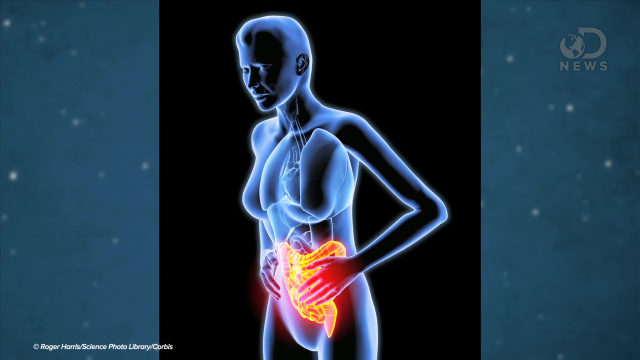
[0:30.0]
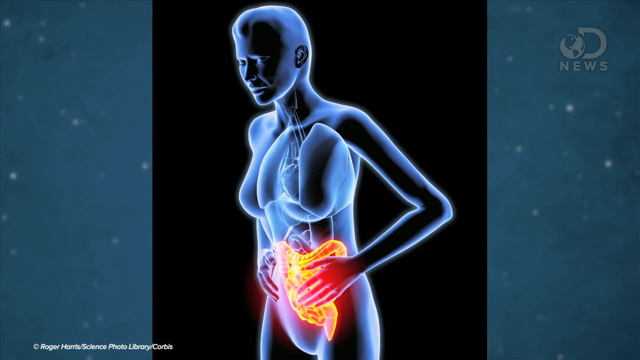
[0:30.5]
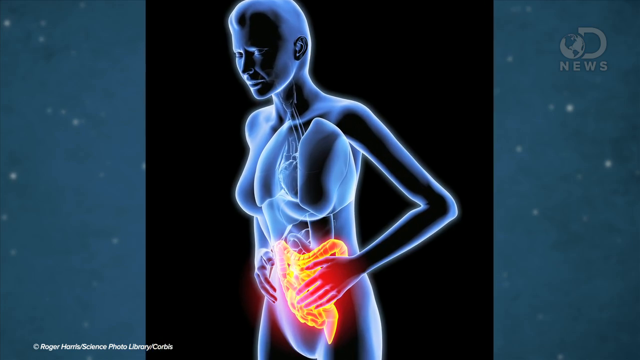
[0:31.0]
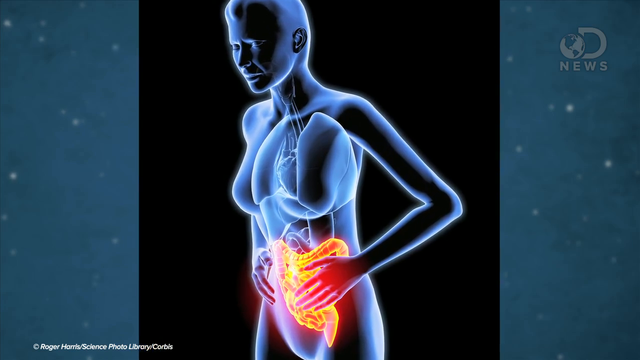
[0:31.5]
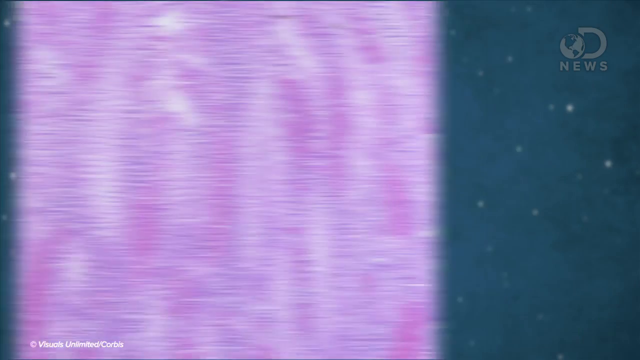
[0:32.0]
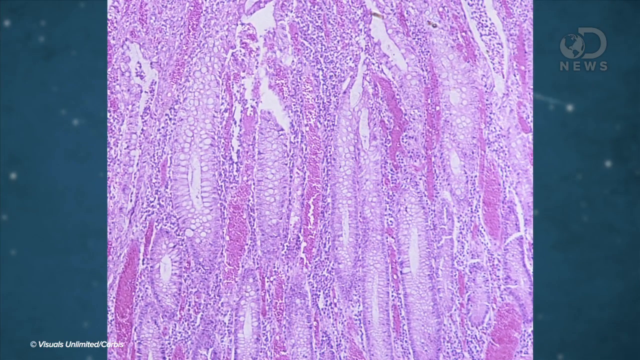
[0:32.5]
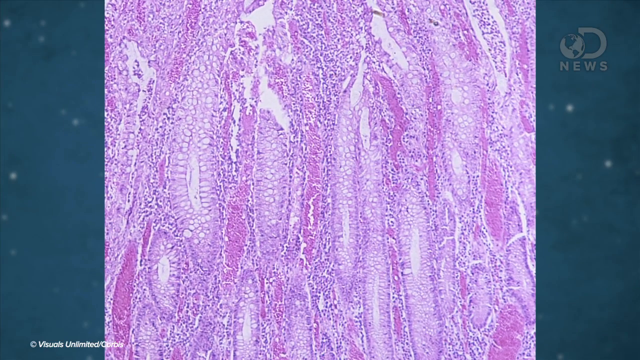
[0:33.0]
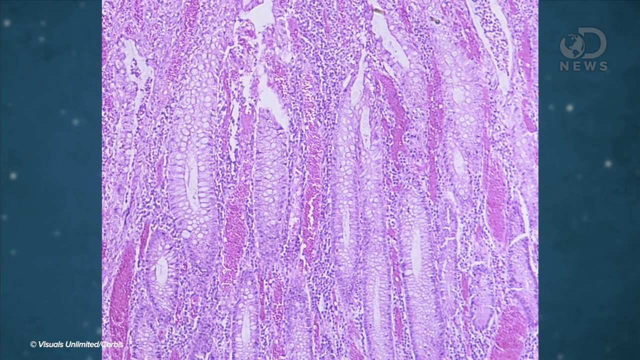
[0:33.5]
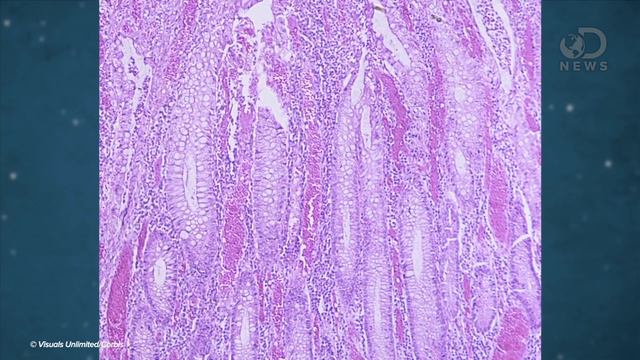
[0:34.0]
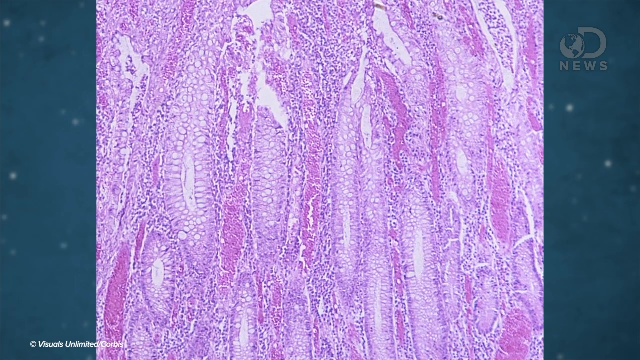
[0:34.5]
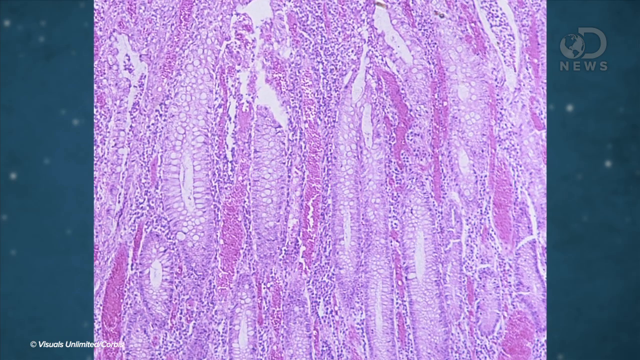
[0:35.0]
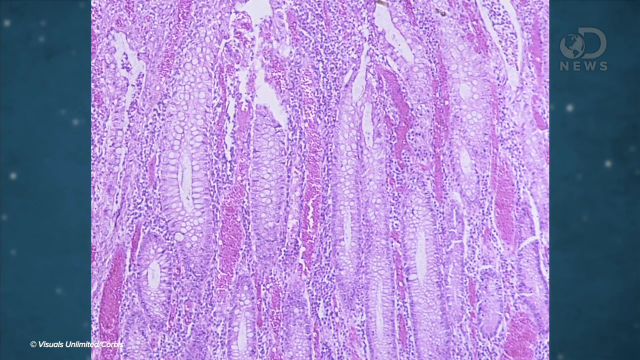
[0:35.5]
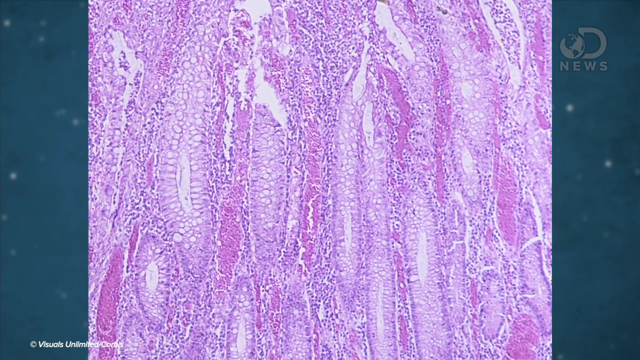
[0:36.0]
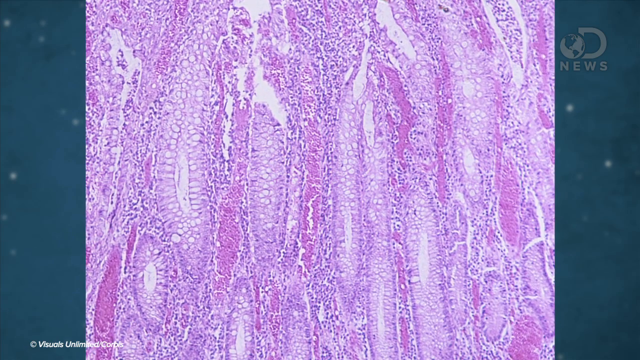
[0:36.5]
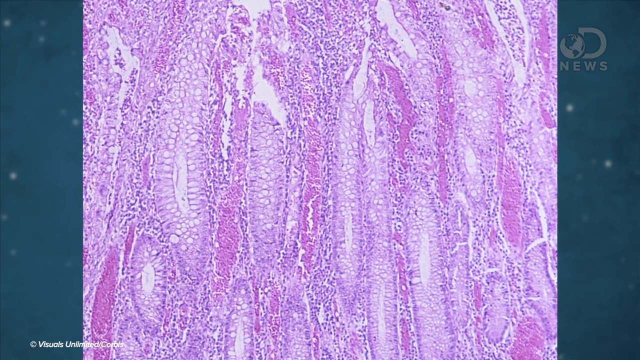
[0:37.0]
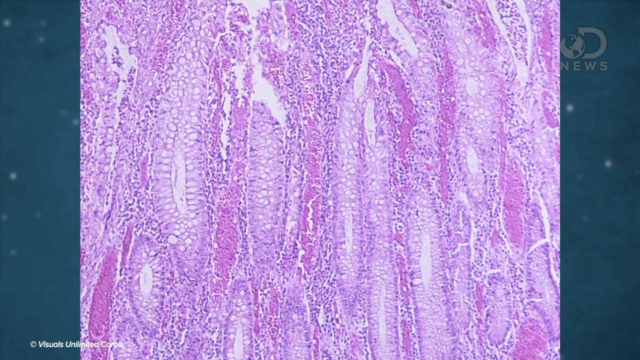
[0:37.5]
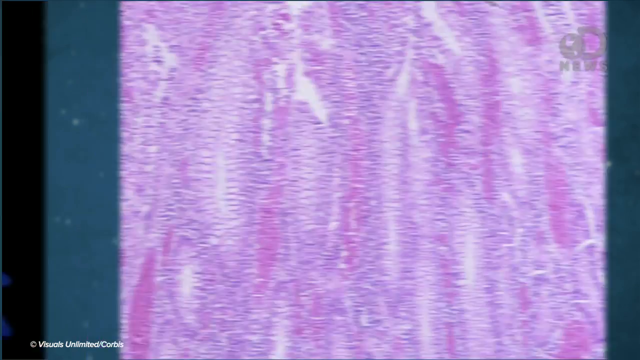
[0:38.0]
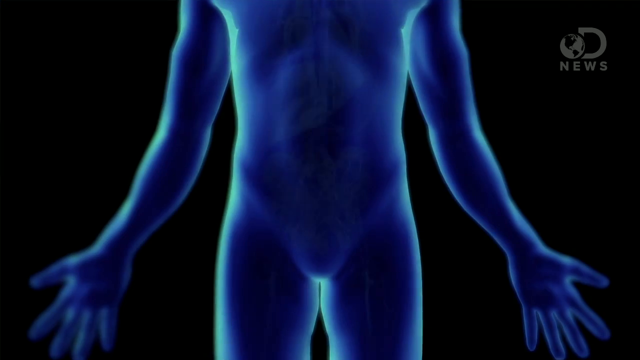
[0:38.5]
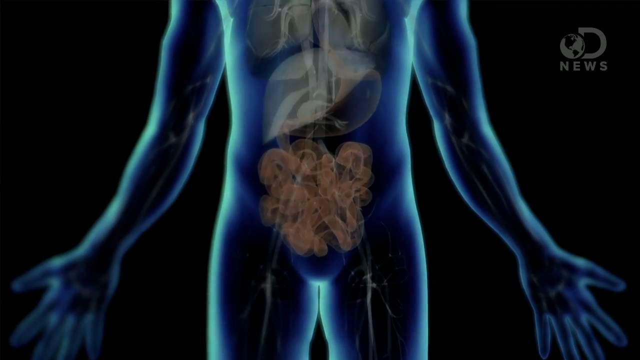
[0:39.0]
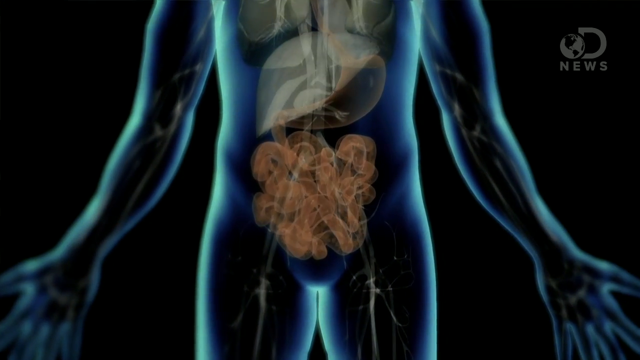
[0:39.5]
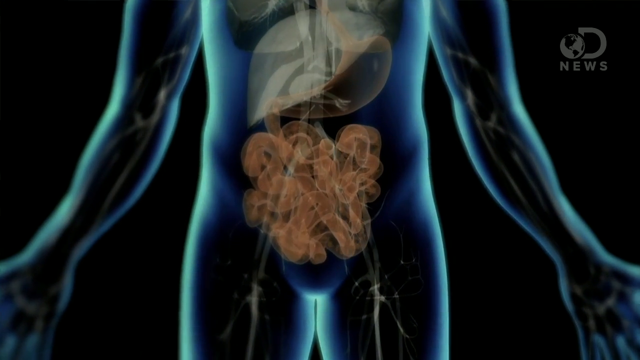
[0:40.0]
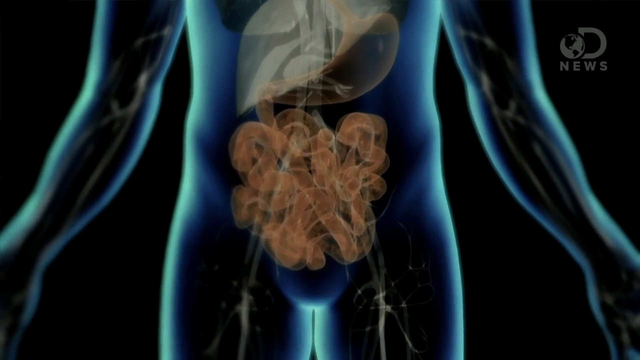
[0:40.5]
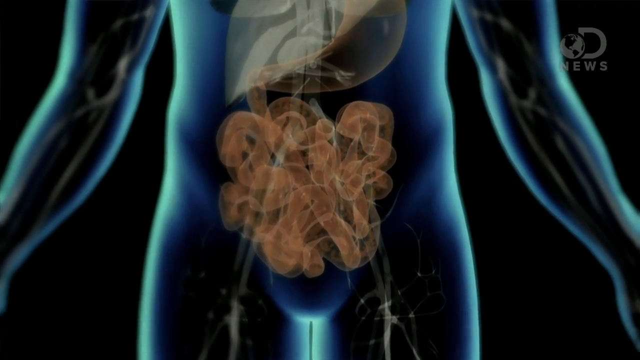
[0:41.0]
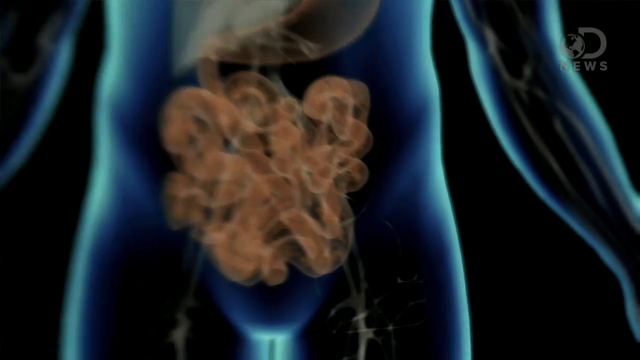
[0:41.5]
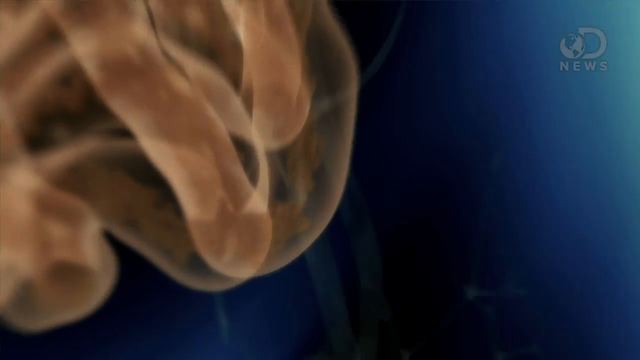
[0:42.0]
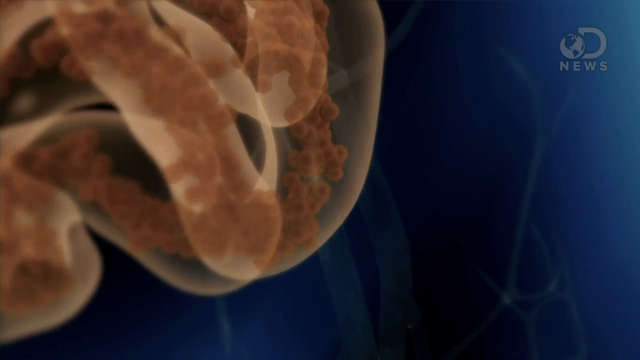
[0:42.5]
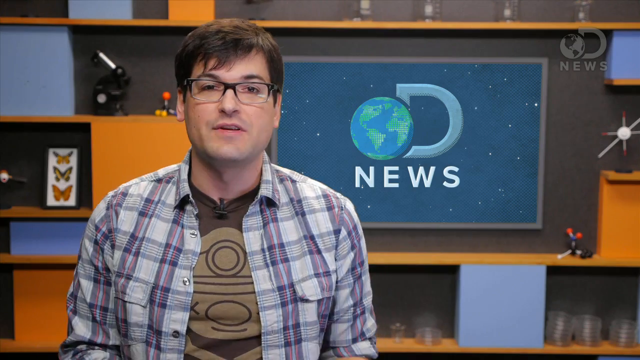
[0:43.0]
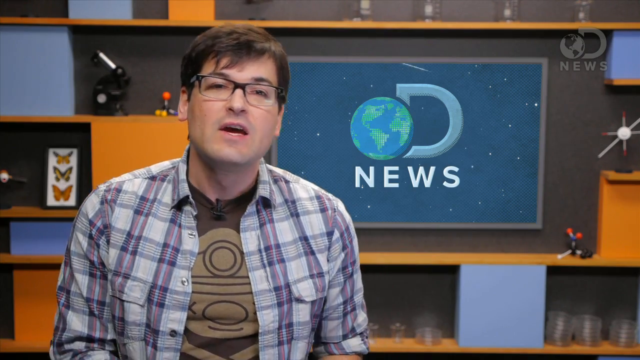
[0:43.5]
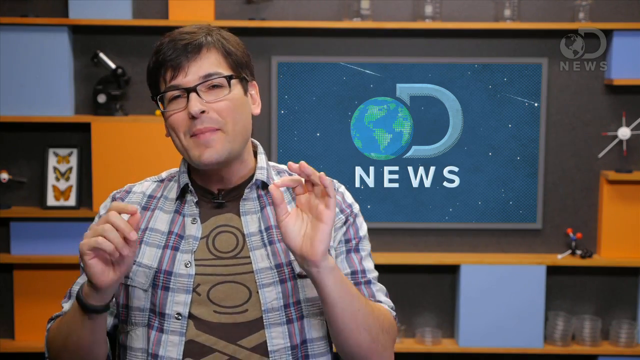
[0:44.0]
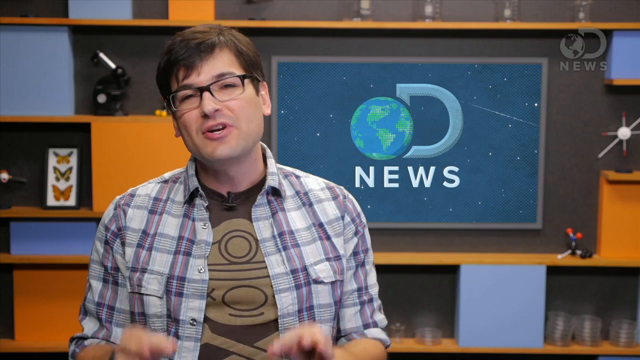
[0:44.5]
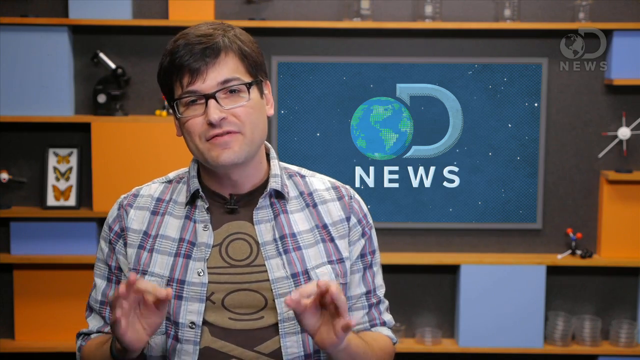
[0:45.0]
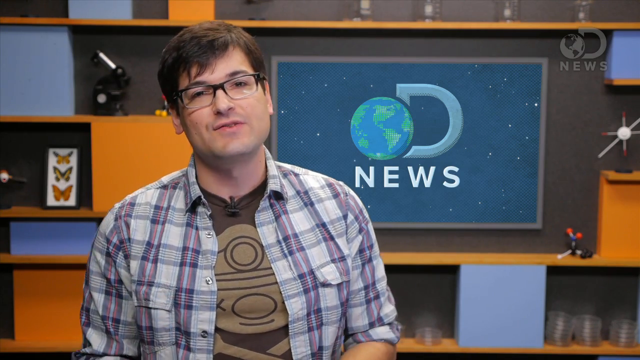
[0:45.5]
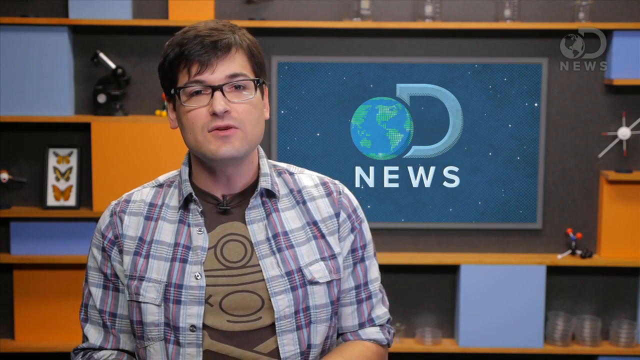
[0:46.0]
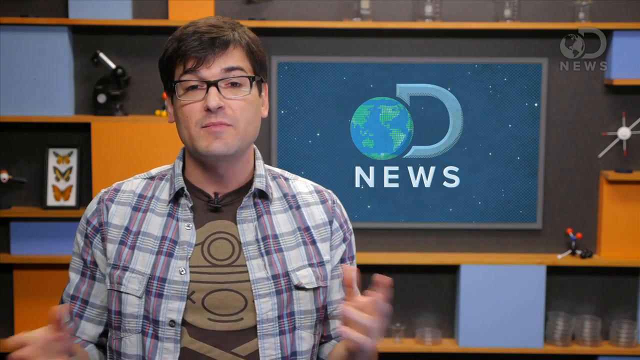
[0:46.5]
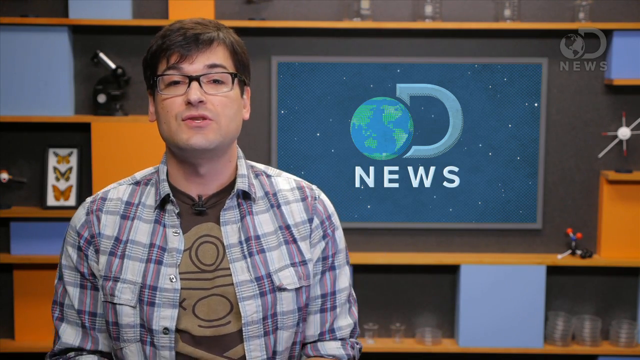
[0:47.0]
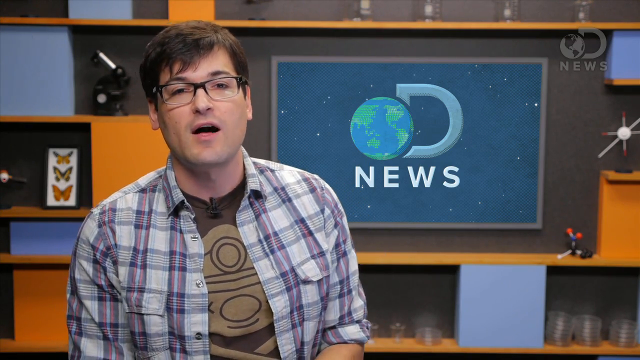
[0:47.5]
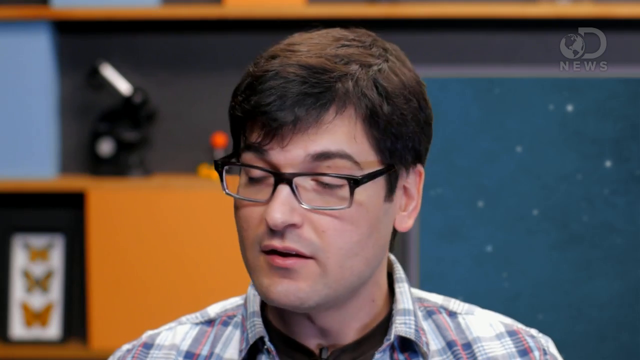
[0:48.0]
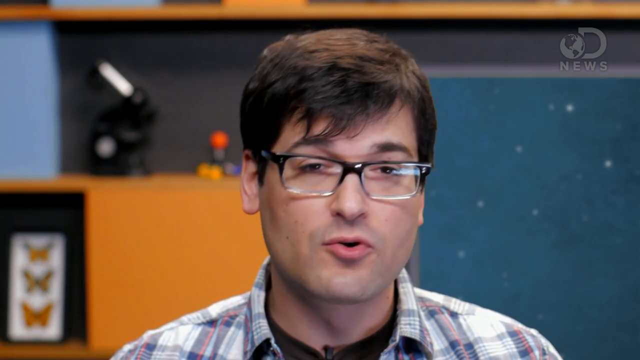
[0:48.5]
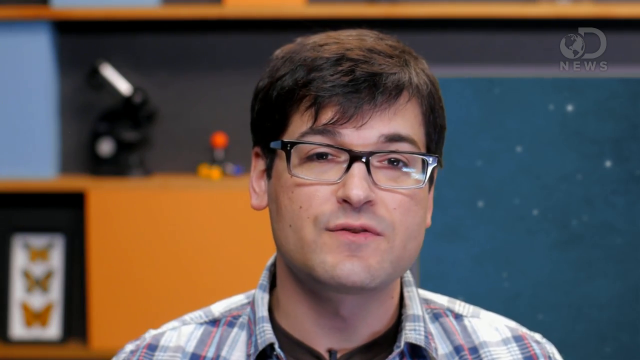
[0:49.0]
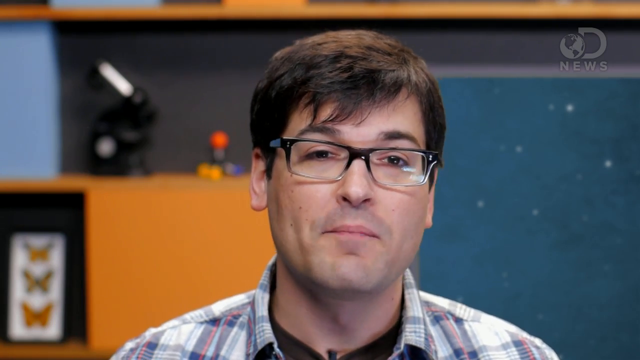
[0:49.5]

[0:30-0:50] A picture of a person appears, almost like an x-ray view, with the intestines visible and lit up in red or orange. The person is blue and has a pained look: eyebrows downward, mouth closed, looking concerned. Their left hand is over the abdomen and intestine area, and their right hand is on their hip. Next comes a close-up of something purple, possibly the intestines. The blue figure appears once more, standing straight up with arms out to the sides, parallel to the hips, palms facing outward and fingers spread. The abdomen area looks like an orange cloud, and orange fluid runs through it. The shot returns to Anthony Carboni, who moves his left shoulder back and then forward as he talks. He holds his hands in a circle and moves them in front of his chest, emphasizing a point, and moves his head to the right and to the left. His mouth moves very fast as he talks quickly.